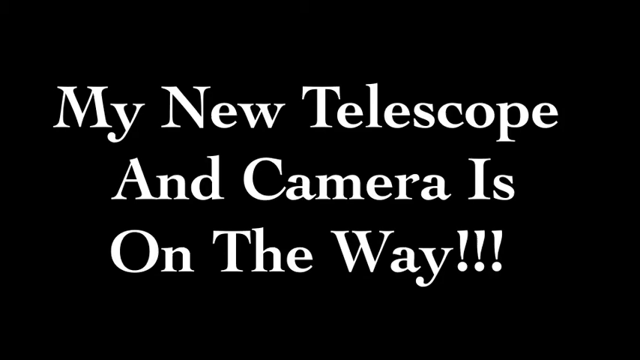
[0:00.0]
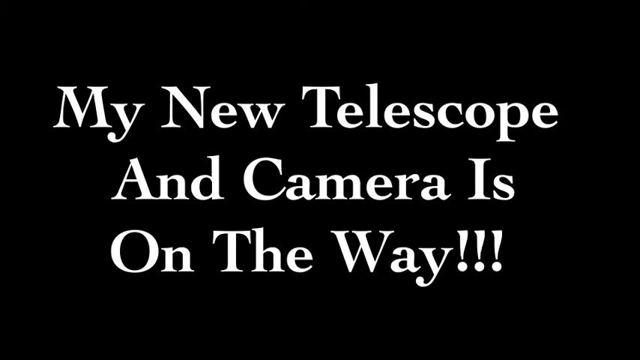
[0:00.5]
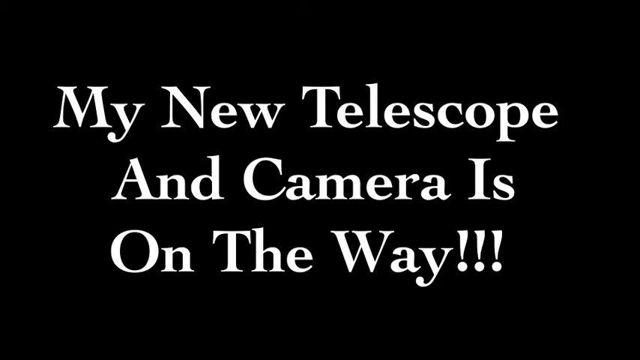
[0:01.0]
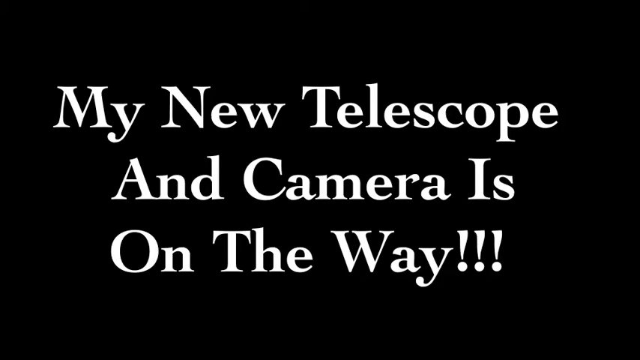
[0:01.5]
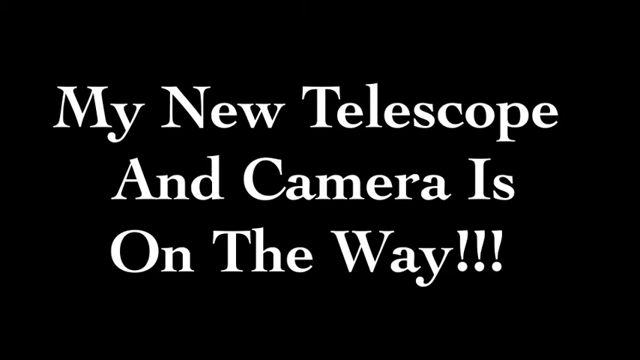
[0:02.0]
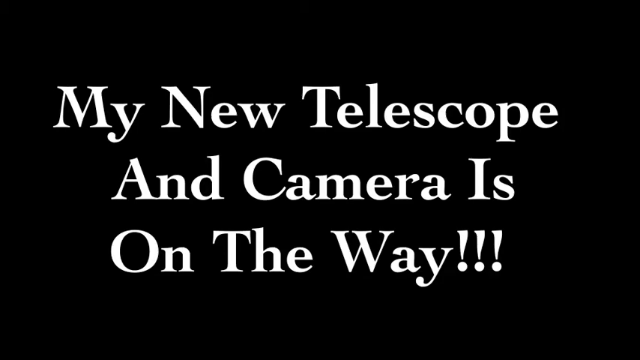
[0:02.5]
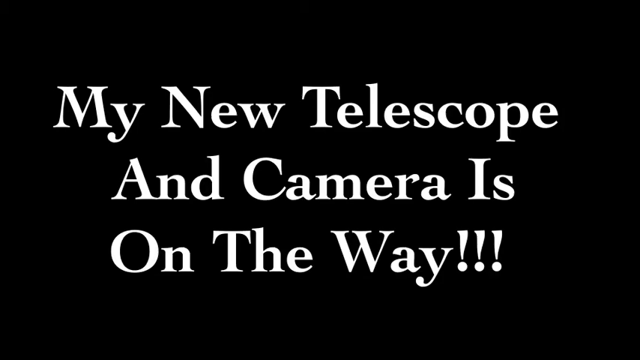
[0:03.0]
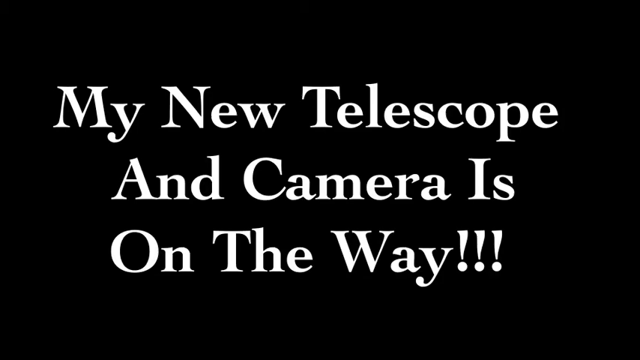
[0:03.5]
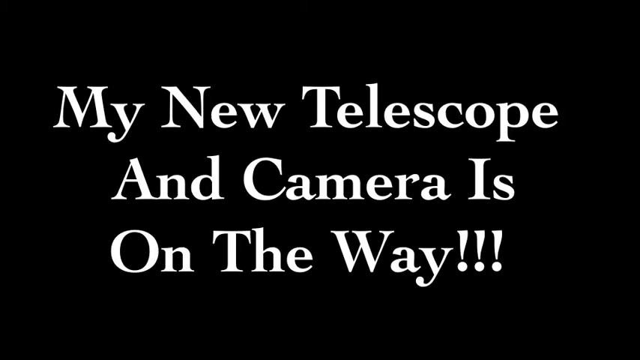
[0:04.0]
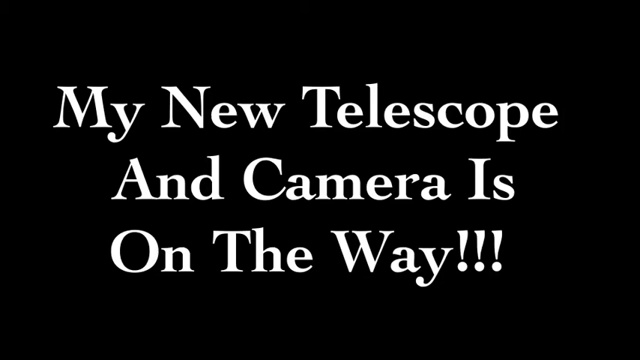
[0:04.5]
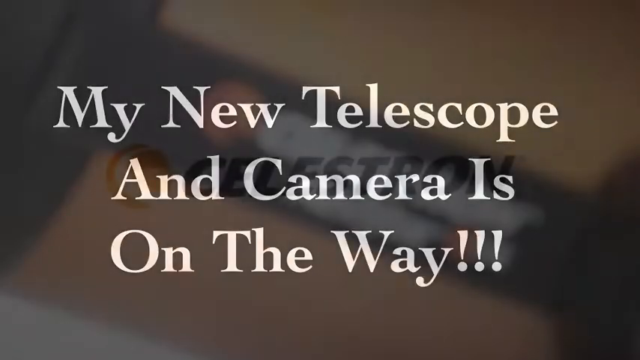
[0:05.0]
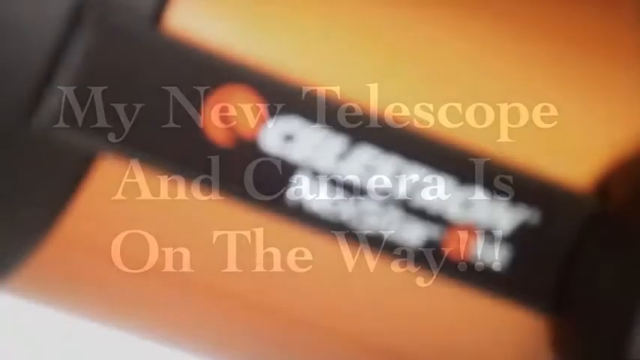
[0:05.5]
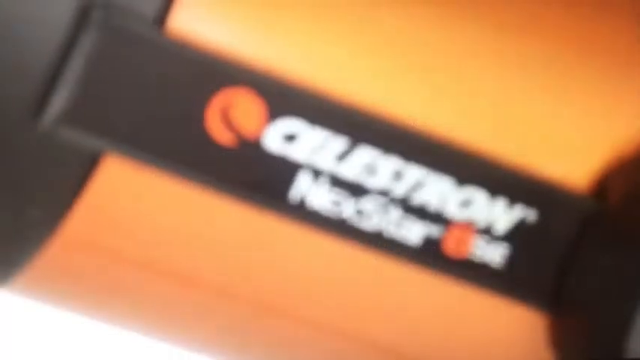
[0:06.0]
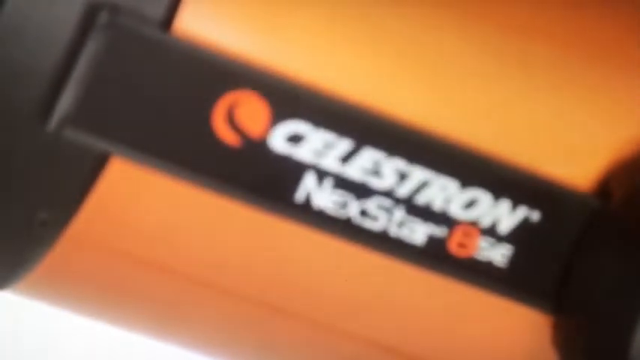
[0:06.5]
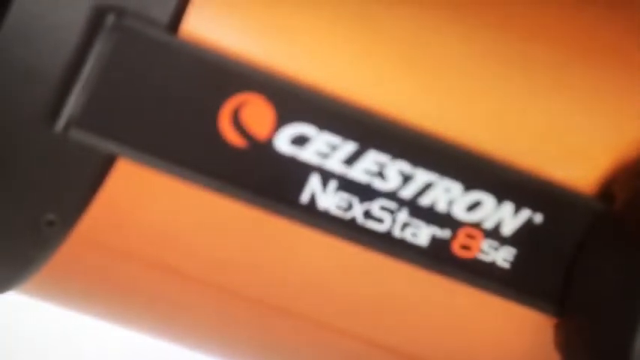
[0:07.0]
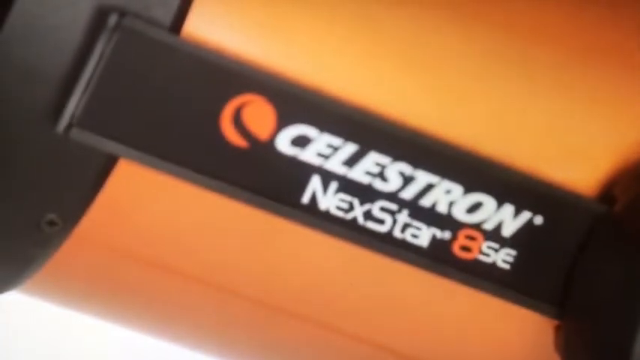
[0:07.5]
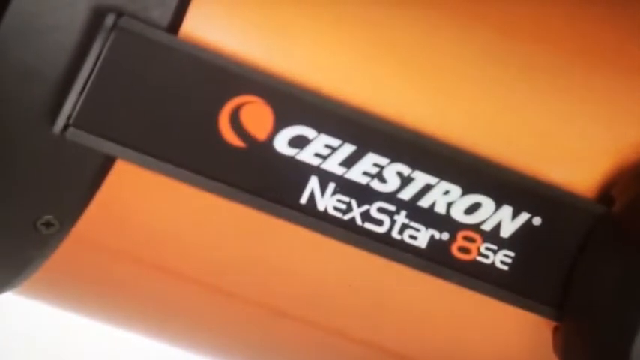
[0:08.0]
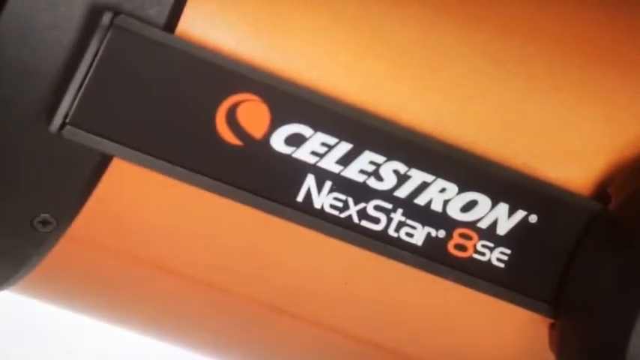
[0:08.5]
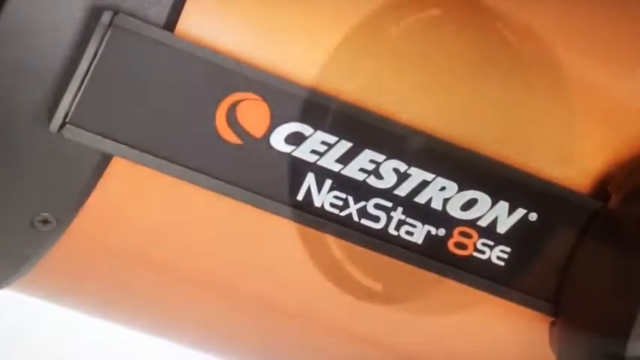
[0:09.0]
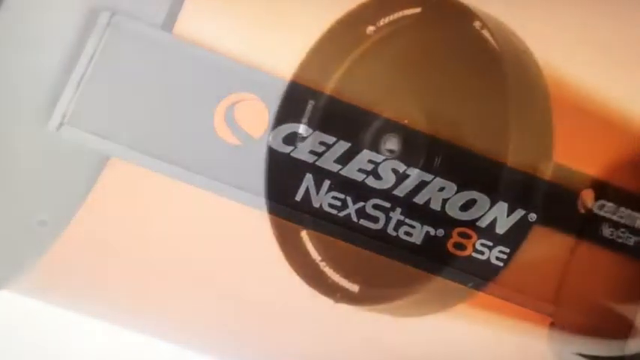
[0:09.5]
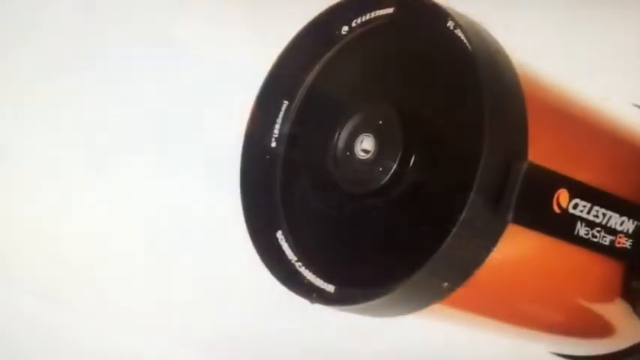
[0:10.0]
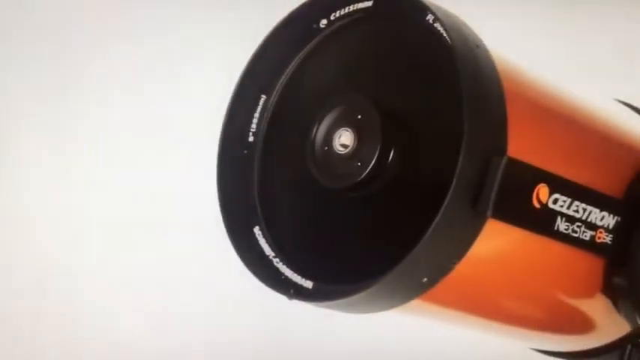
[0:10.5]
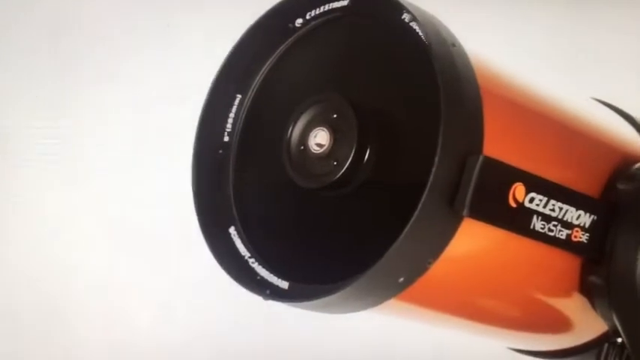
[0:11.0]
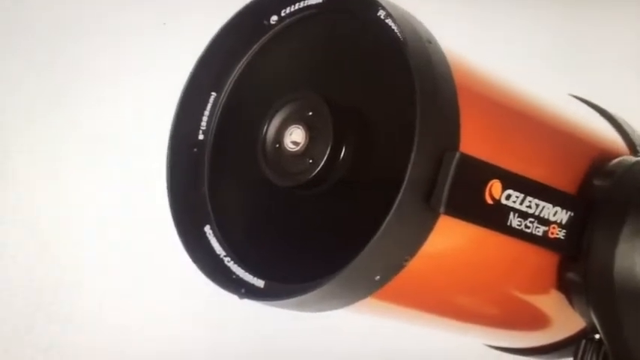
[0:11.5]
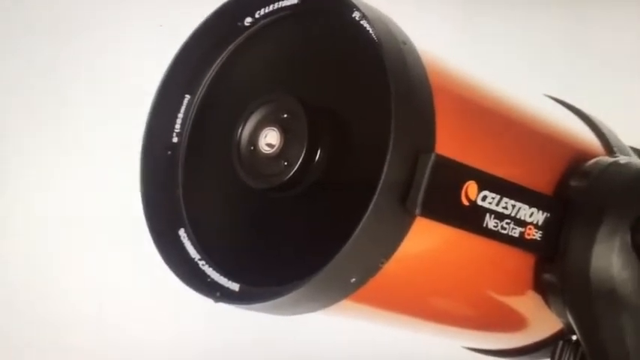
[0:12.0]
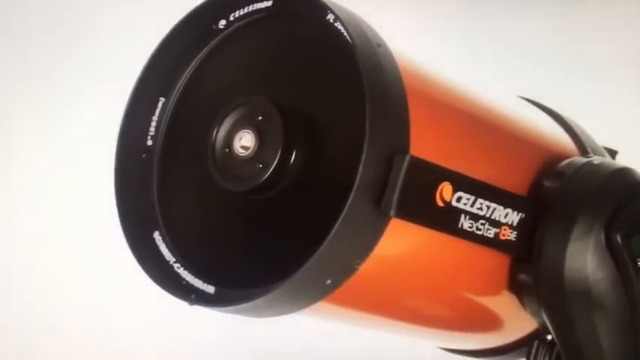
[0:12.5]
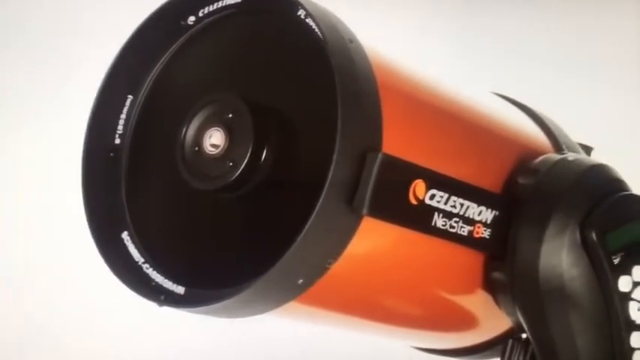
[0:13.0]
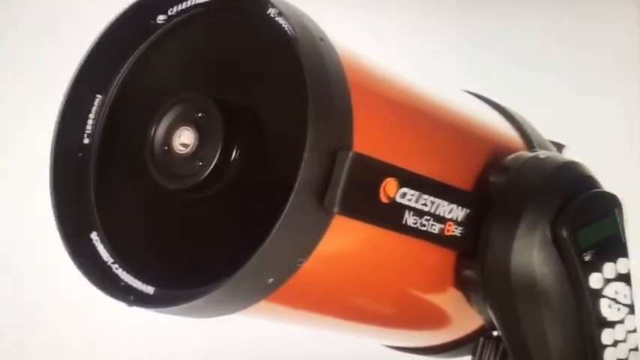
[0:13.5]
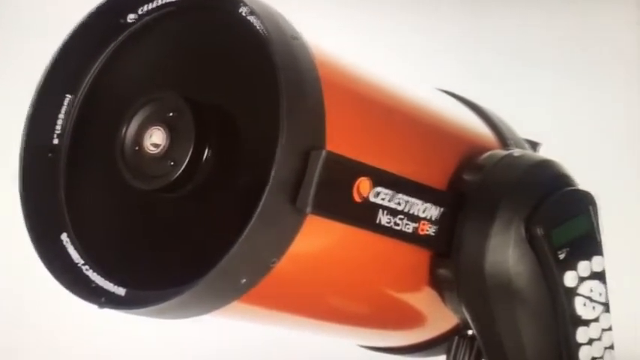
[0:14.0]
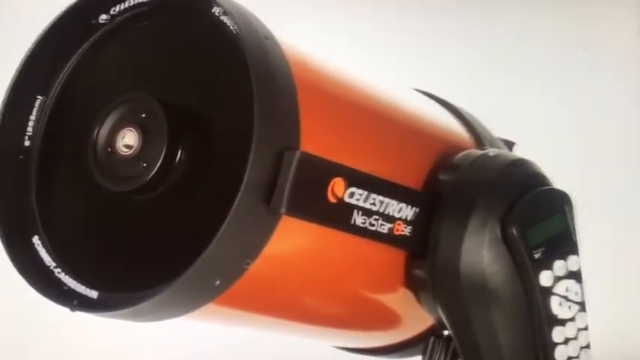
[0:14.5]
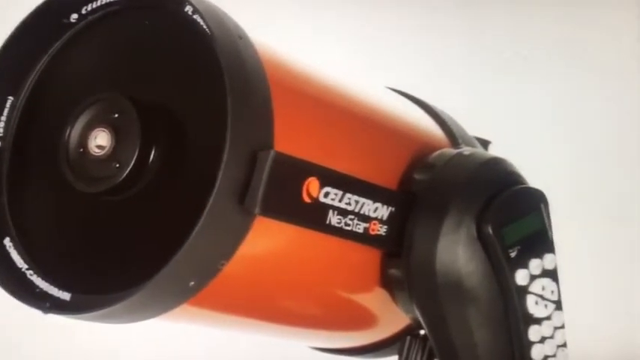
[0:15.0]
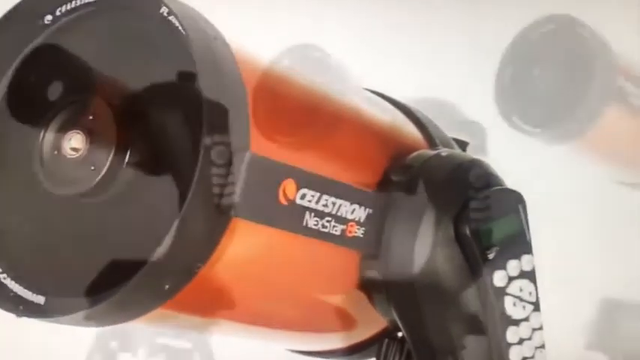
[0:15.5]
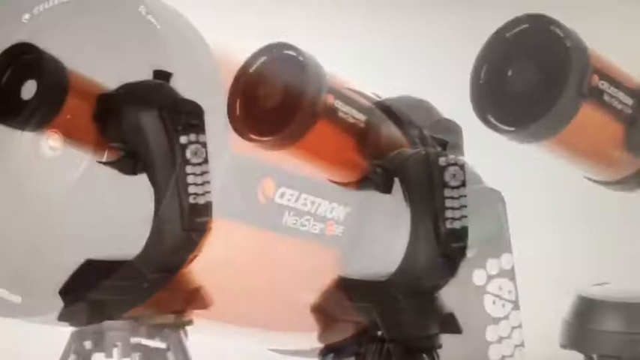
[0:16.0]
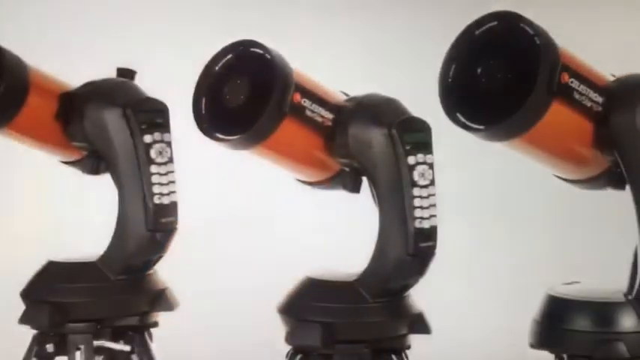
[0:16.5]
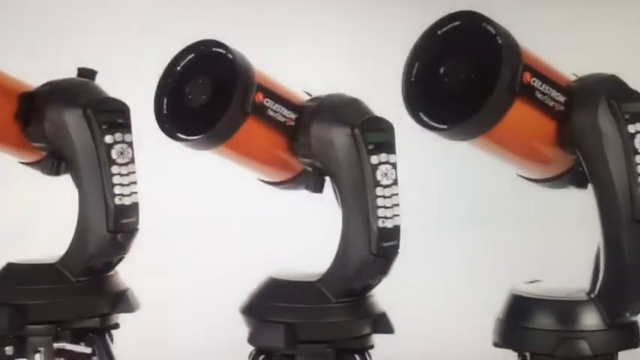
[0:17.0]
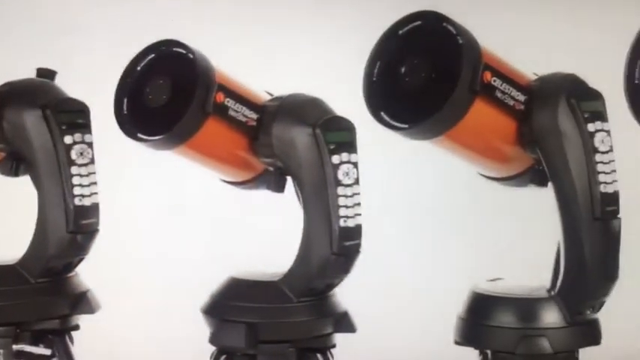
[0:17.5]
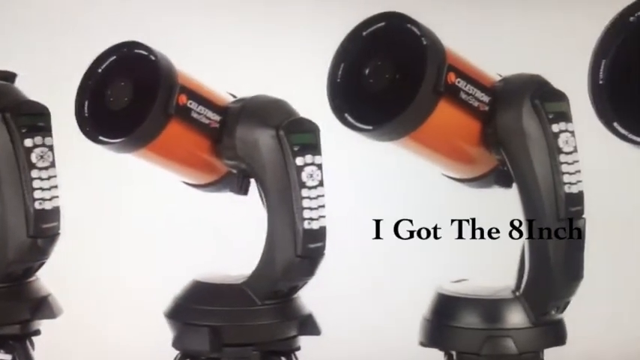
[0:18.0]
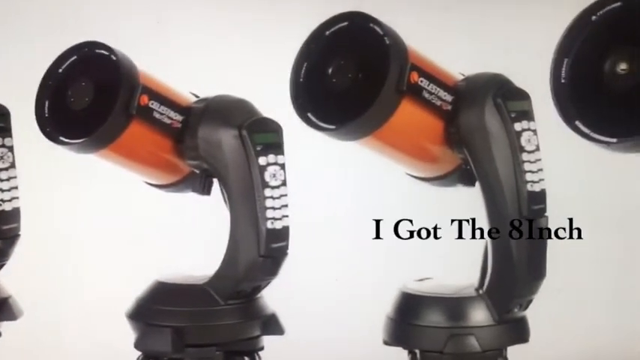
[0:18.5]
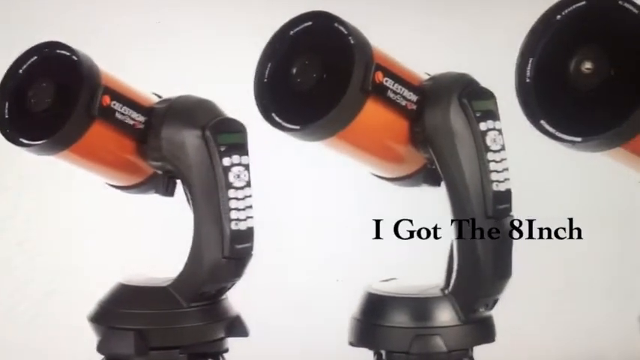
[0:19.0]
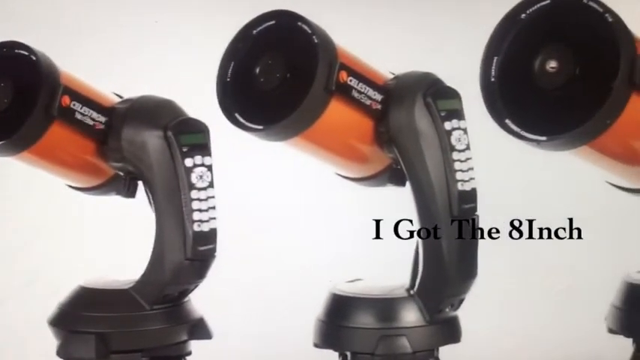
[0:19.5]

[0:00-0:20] A black background shows bolded white text that says "my new telescope and camera is on the way!!!" It transitions to a screen with a bit of a blurry effect that slowly kind of comes into focus on an orange and black device, apparently a telescope. An orange logo on it carries bolded white text that says "Celestron Nexstar 8SE". The video then transitions to a device with a kind of telescope look to it, moving to the right, with a bunch of little buttons on the device that is white. Next, multiple devices of the same kind appear with bolded black text that says "I got the eight inch"; initially they kind of look like flashlights until they are seen in full.